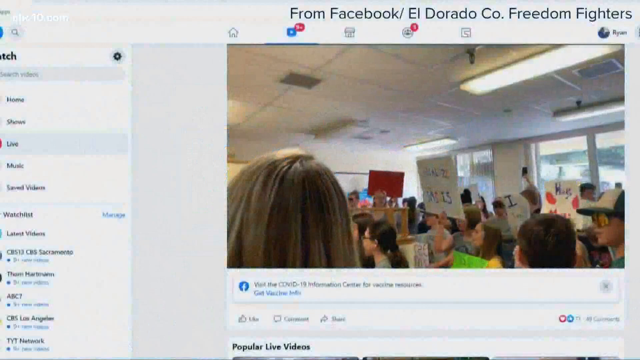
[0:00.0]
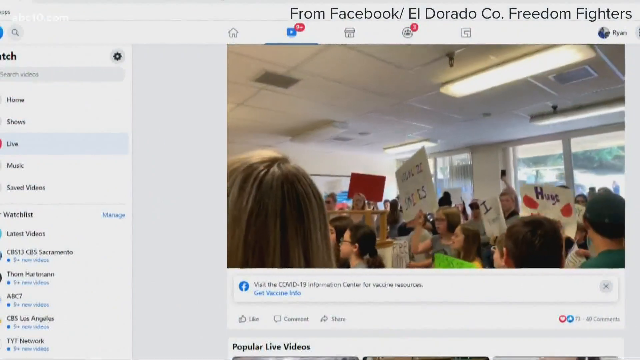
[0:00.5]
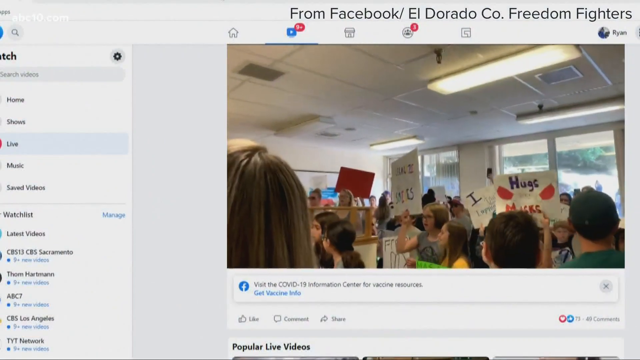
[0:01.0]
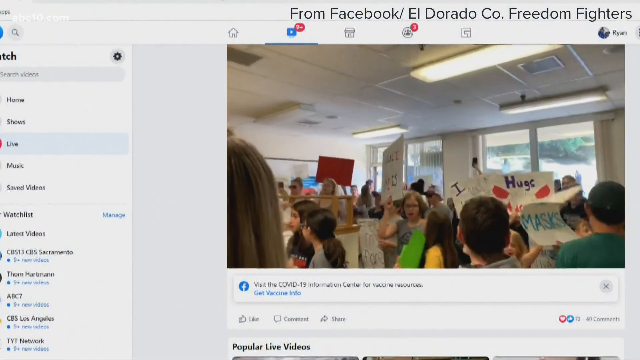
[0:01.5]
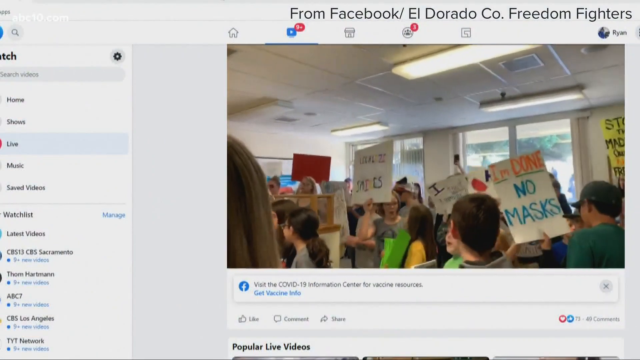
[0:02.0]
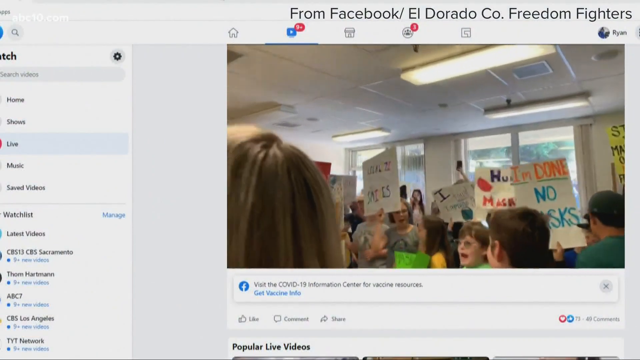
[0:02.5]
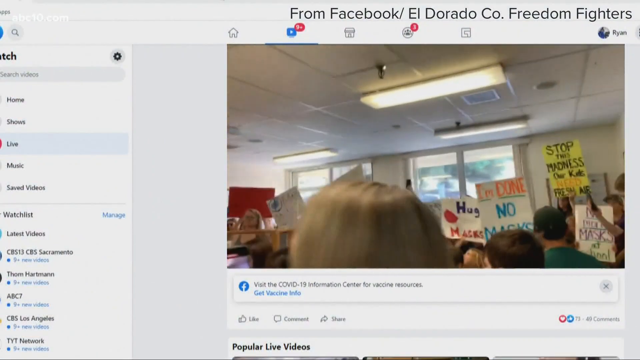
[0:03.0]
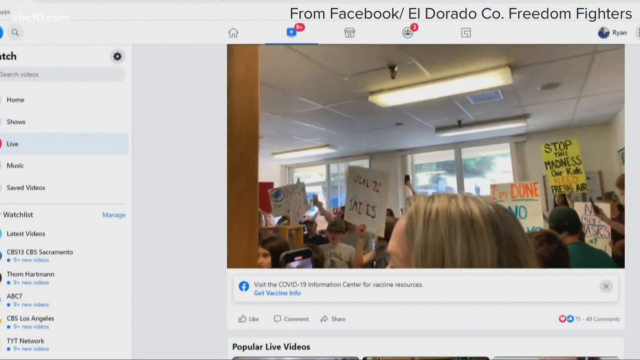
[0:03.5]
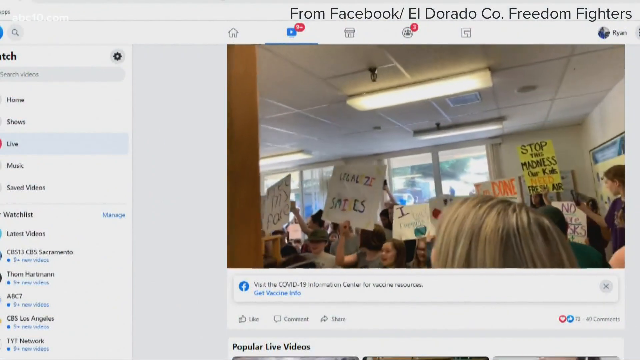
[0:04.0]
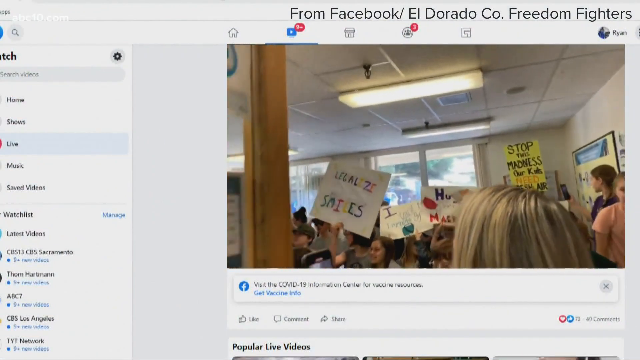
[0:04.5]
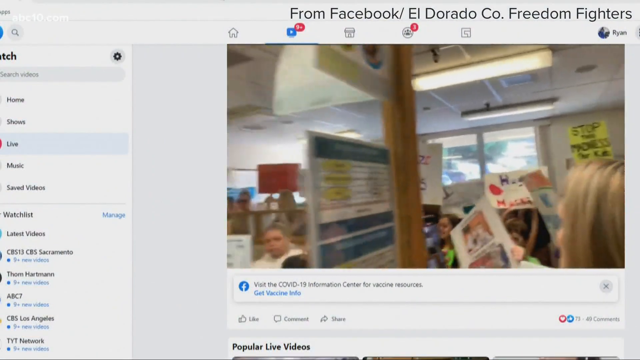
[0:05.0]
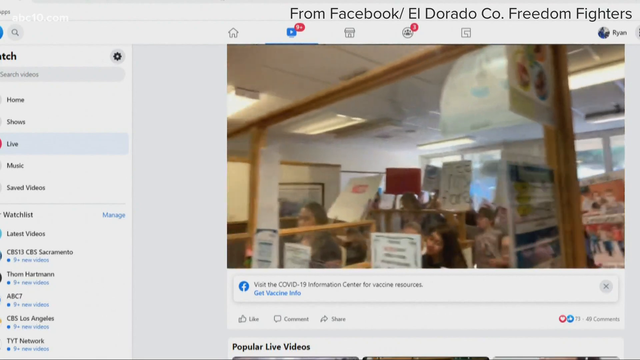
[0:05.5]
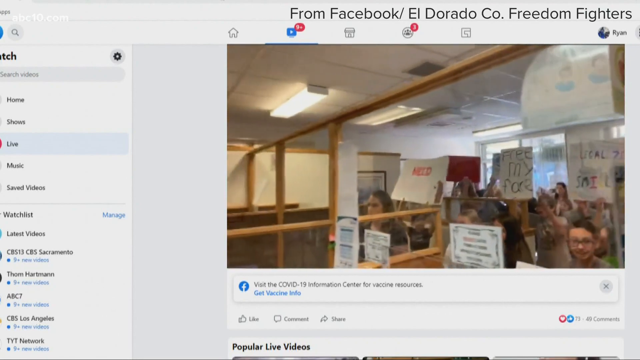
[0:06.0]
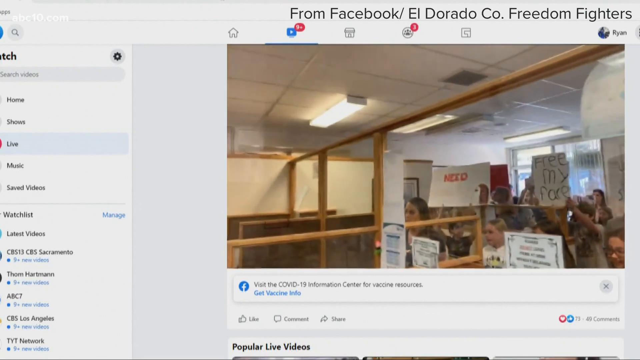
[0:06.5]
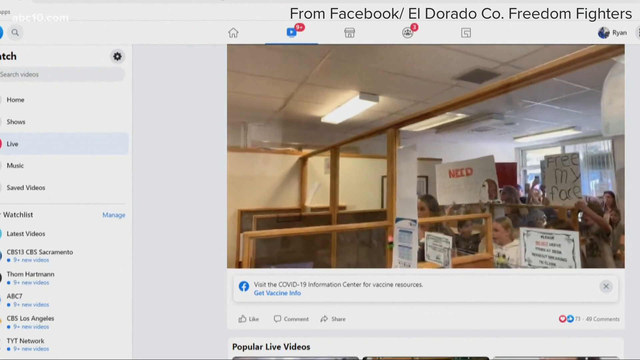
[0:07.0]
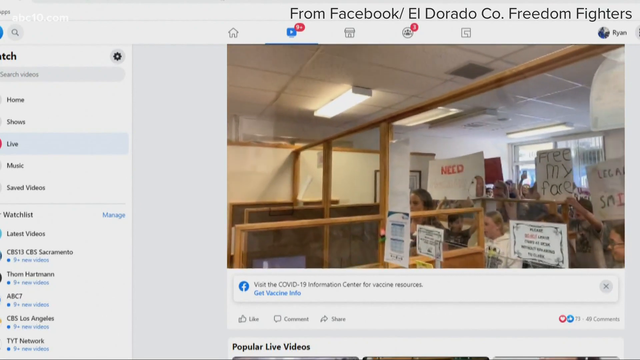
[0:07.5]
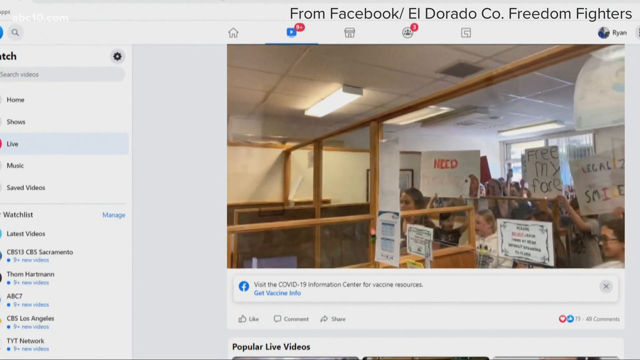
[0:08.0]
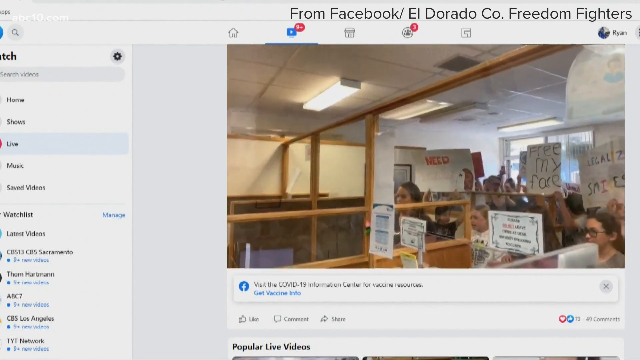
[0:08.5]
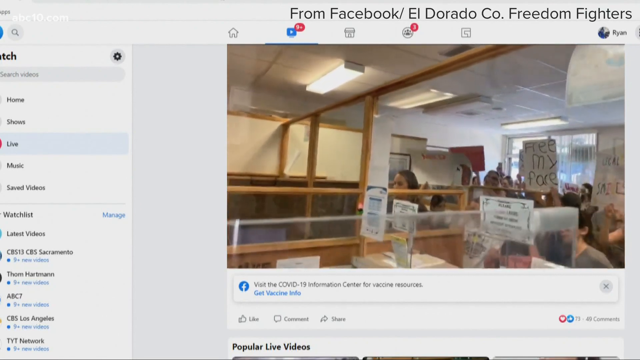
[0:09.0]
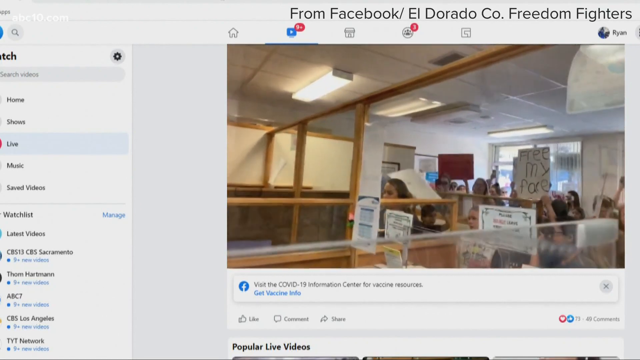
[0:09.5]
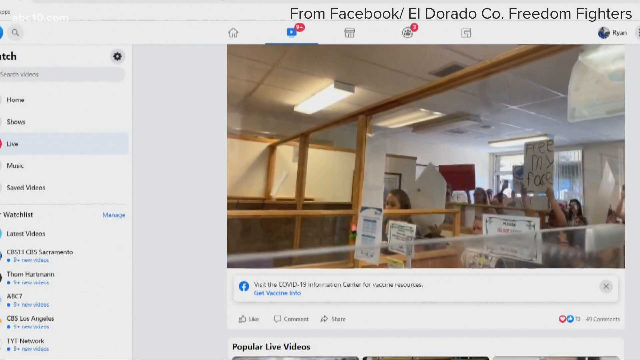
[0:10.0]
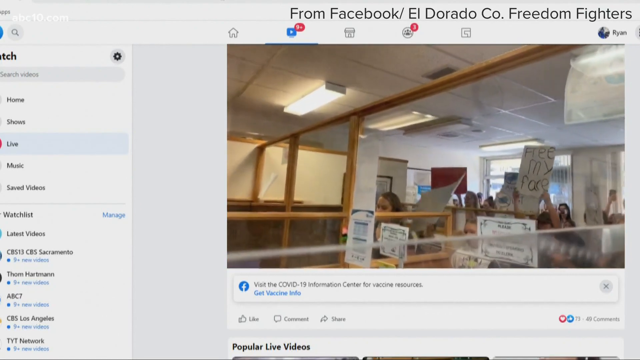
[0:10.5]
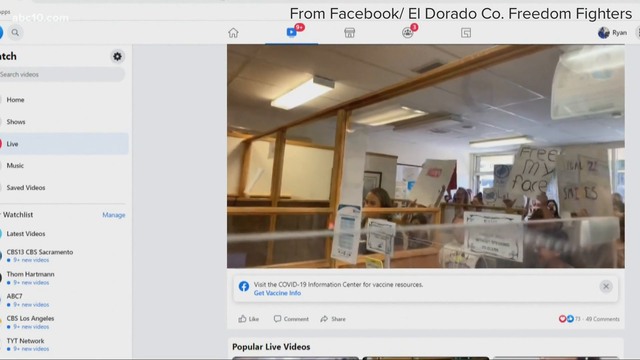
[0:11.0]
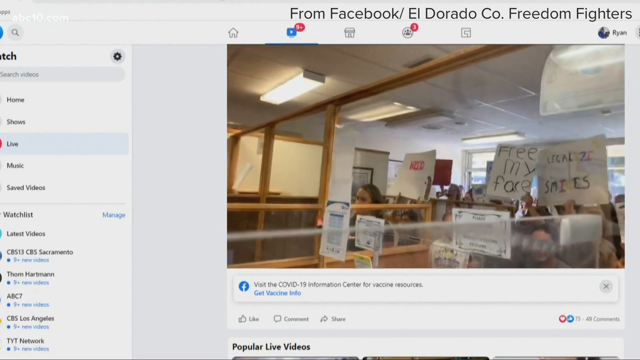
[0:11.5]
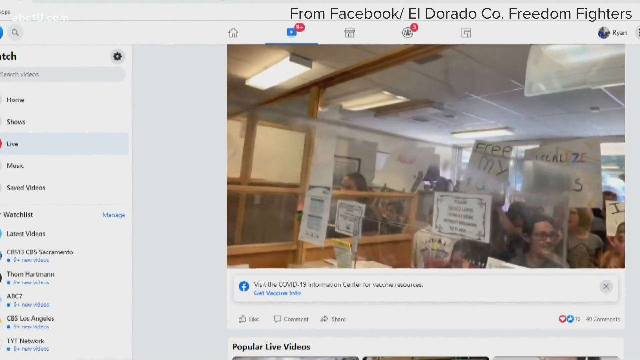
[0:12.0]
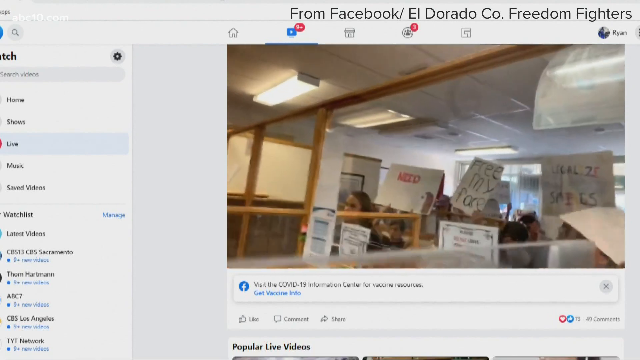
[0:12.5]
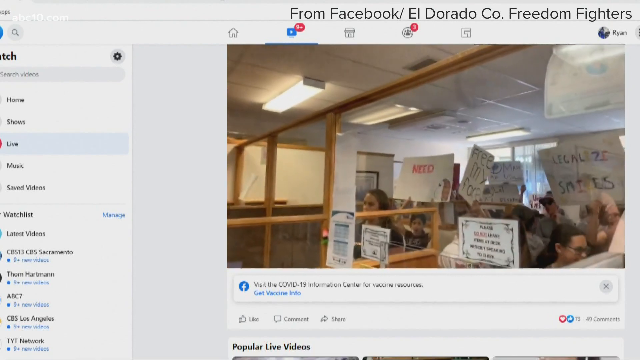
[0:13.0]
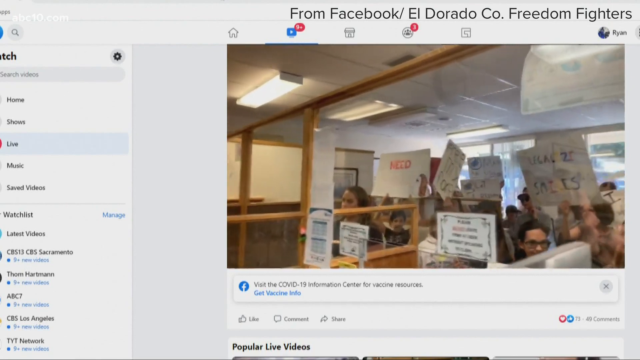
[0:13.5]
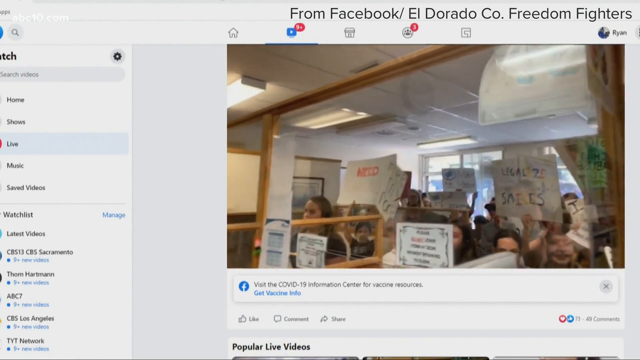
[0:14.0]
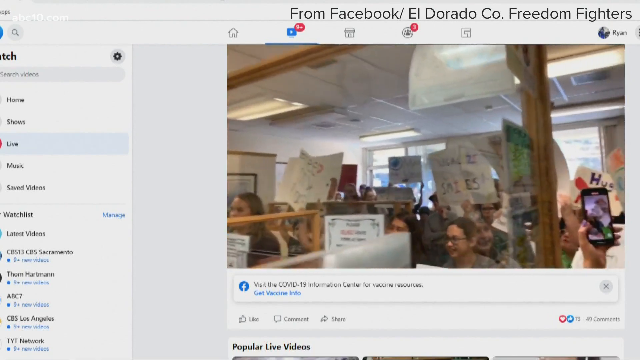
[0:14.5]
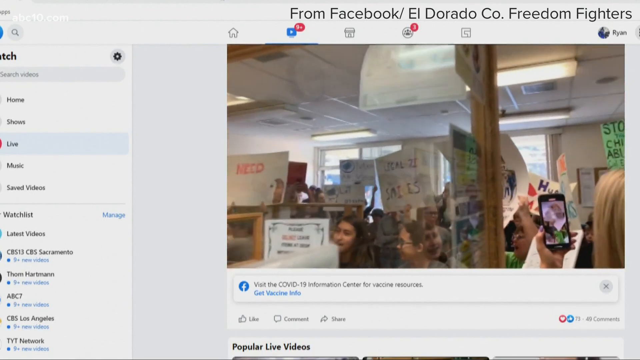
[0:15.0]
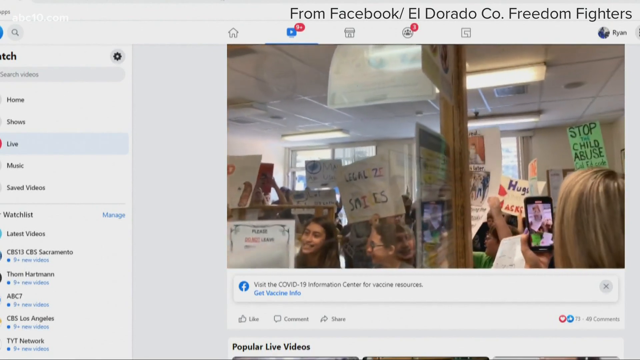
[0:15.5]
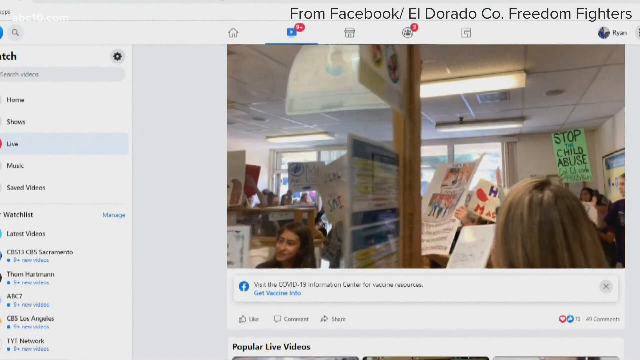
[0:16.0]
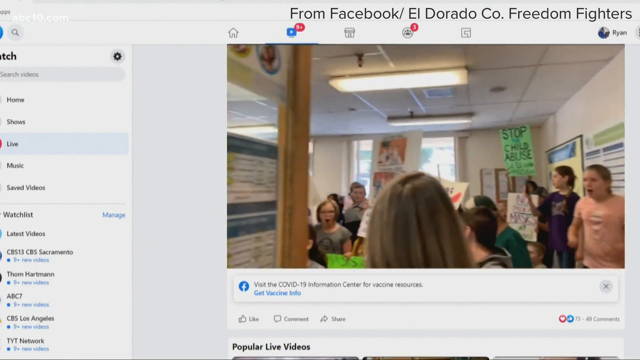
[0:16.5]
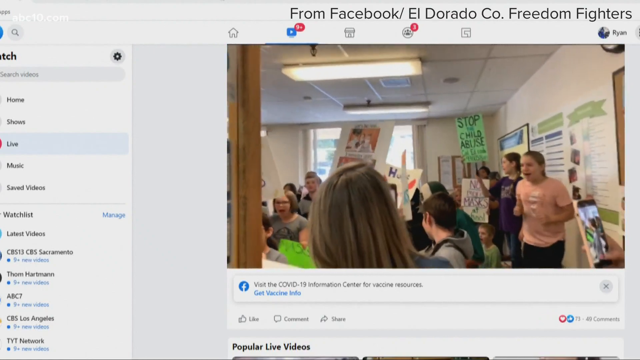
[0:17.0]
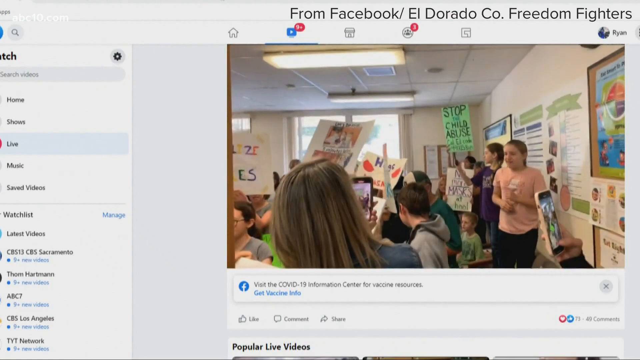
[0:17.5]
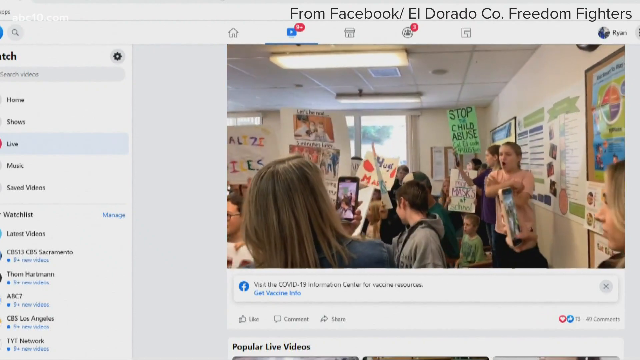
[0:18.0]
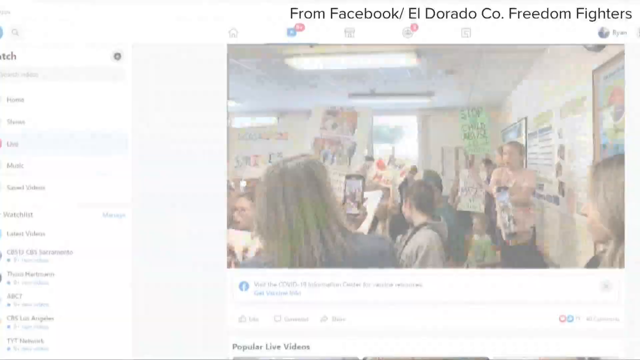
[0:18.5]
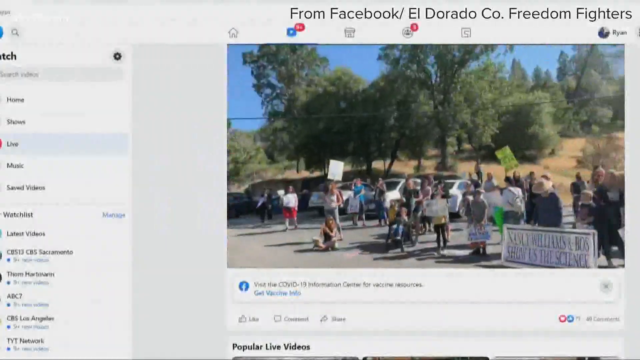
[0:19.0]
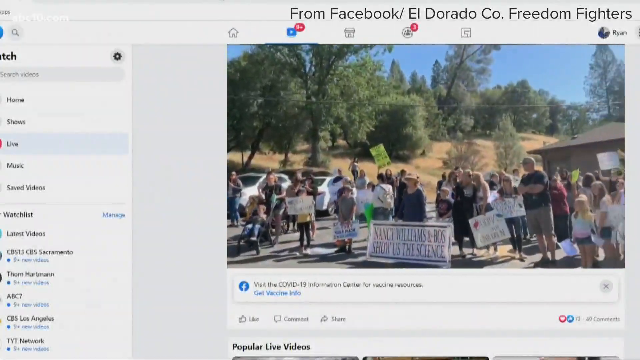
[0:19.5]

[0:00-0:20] The screen shows a Facebook page; the page, called Freedom Fighters, is named at the top. A video is playing on the page, showing school kids in a room who appear to be holding up signs, one of which says "I'm done, no masks." Underneath the video is a banner that says "visit the COVID-19 Information Center for vaccine resources," followed by a hyperlink for "get vaccine info." As the video plays, it zooms over to show that the kids appear to be protesting inside a large room, each holding multiple signs in their own handwriting. The video then pans over to show adults in the room with them, recording the kids protesting. Facebook icons are visible on the left-hand side.